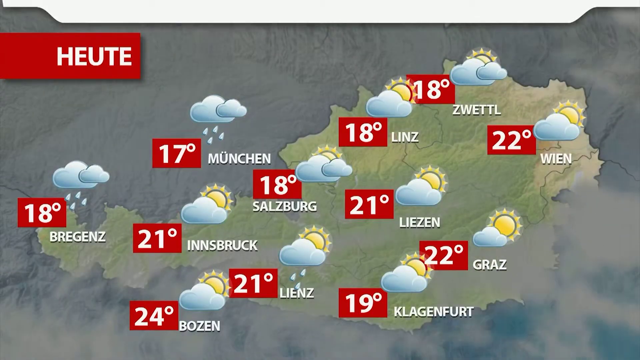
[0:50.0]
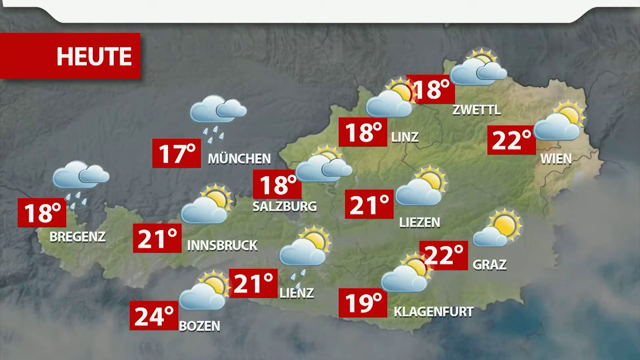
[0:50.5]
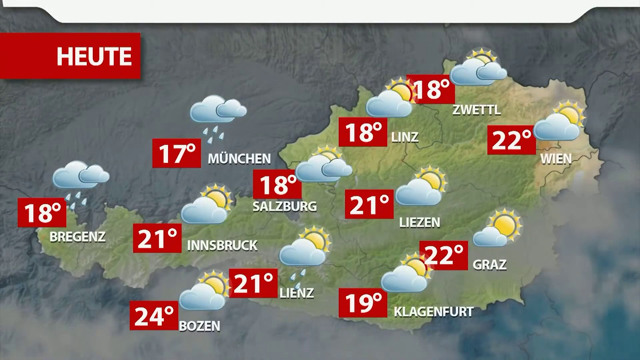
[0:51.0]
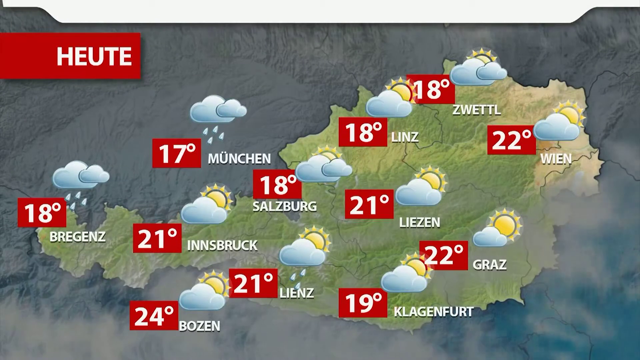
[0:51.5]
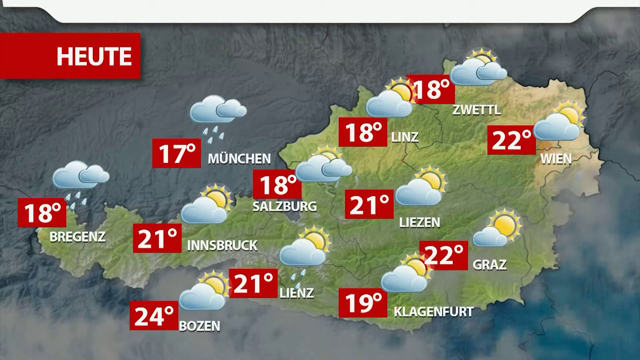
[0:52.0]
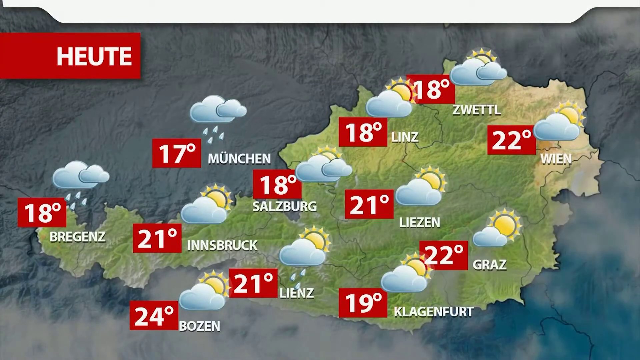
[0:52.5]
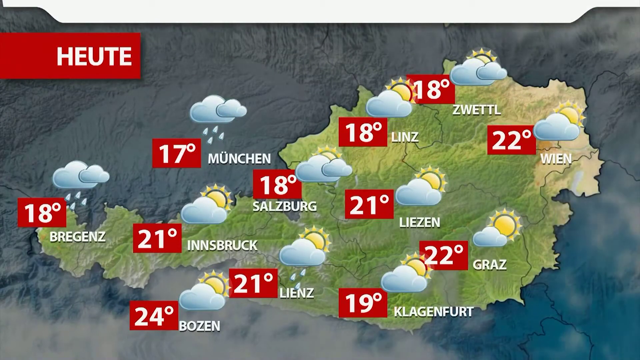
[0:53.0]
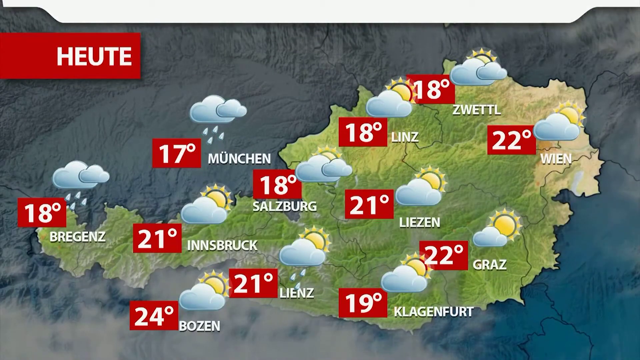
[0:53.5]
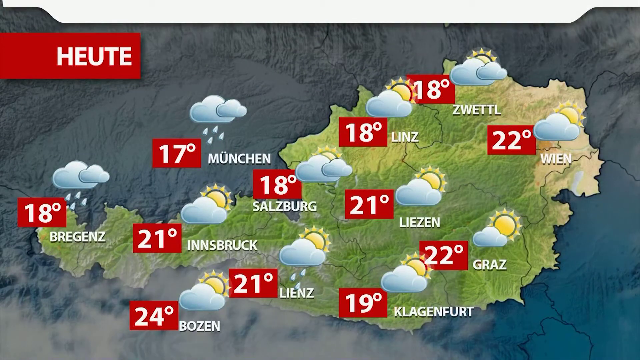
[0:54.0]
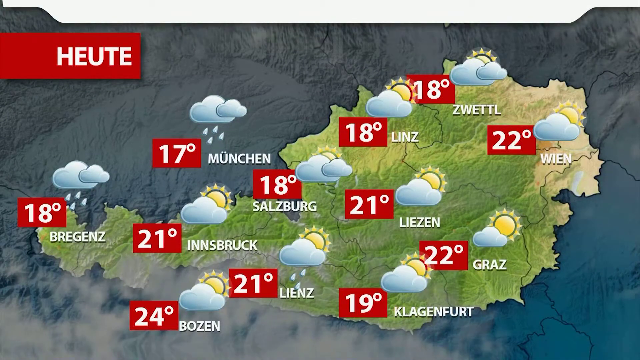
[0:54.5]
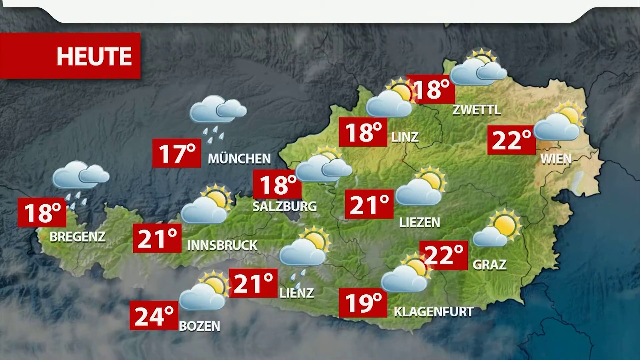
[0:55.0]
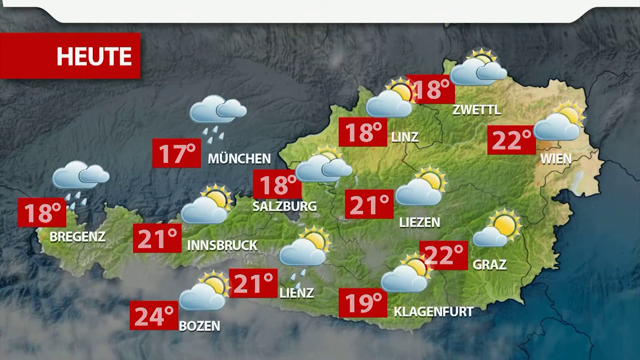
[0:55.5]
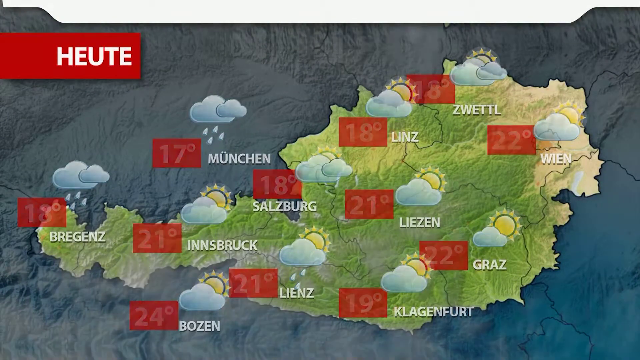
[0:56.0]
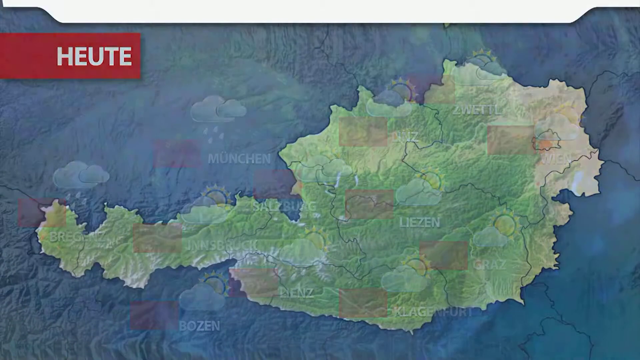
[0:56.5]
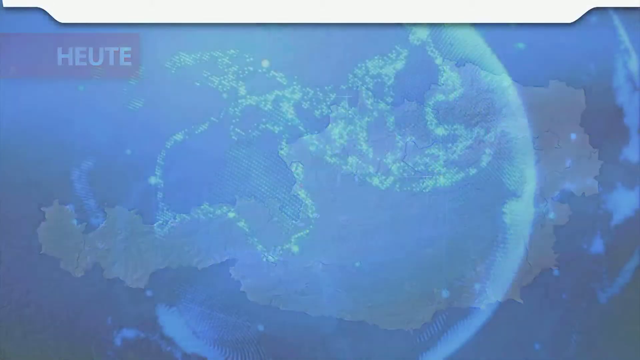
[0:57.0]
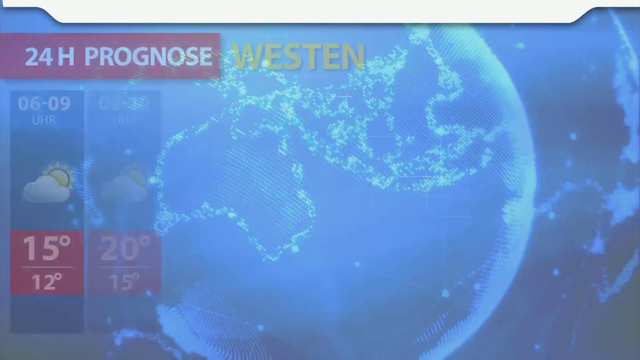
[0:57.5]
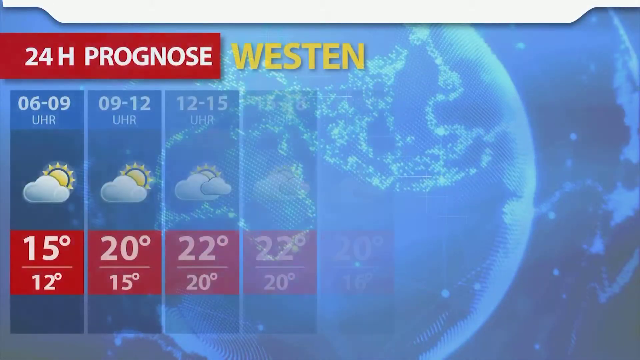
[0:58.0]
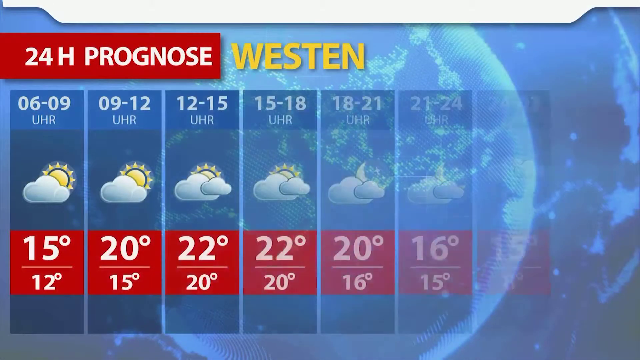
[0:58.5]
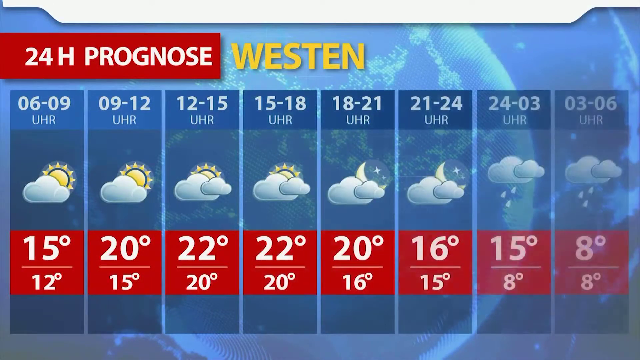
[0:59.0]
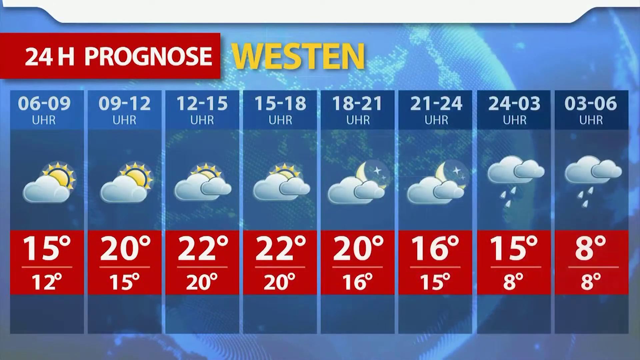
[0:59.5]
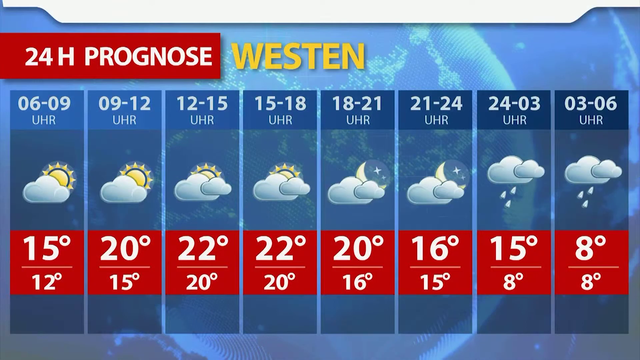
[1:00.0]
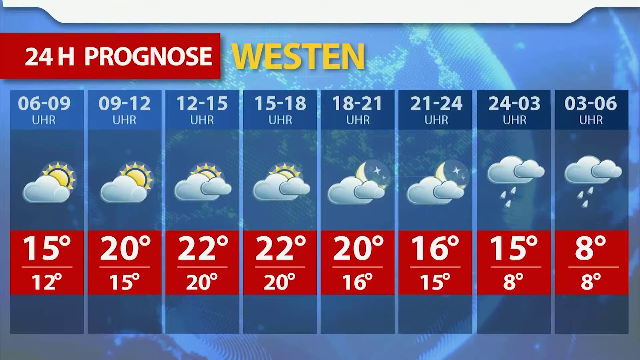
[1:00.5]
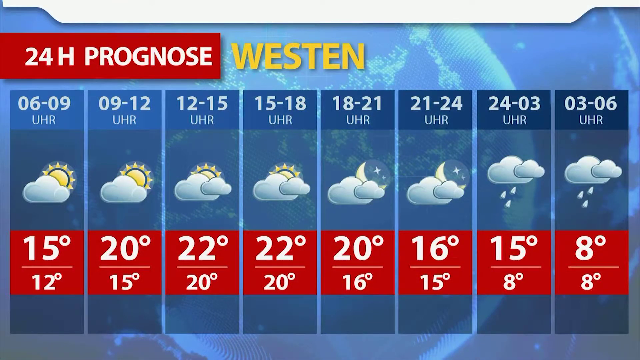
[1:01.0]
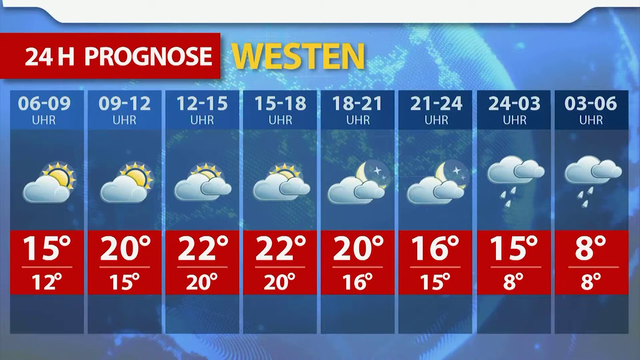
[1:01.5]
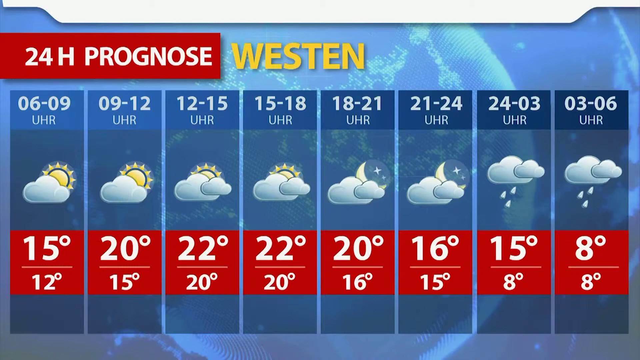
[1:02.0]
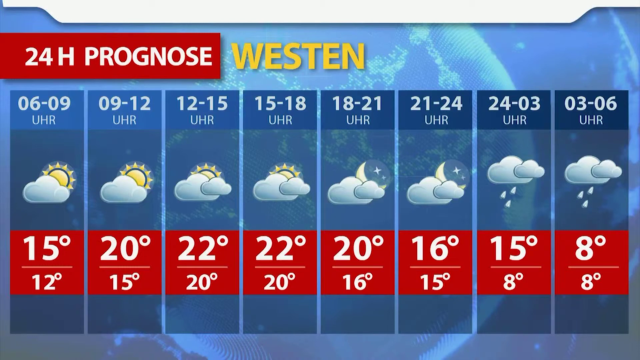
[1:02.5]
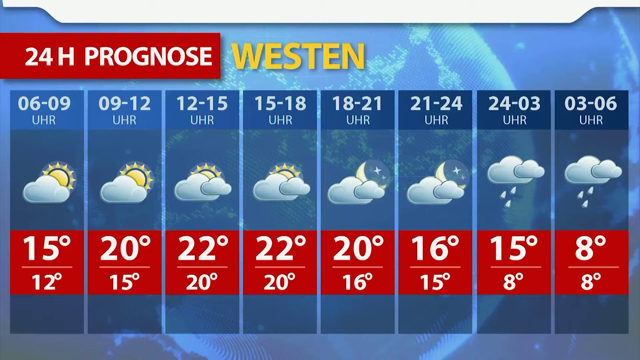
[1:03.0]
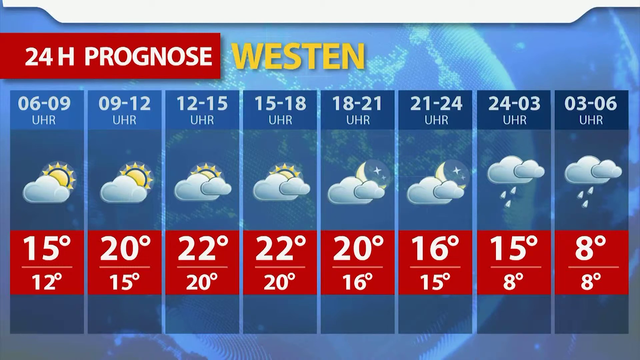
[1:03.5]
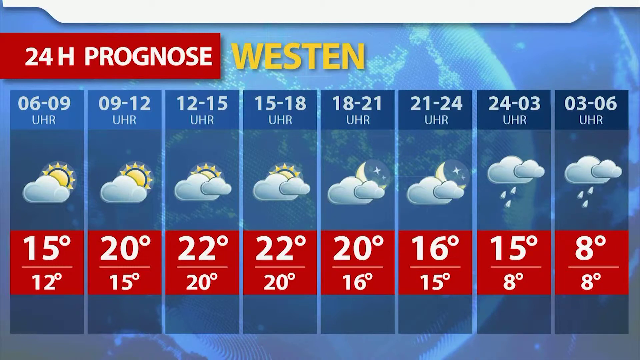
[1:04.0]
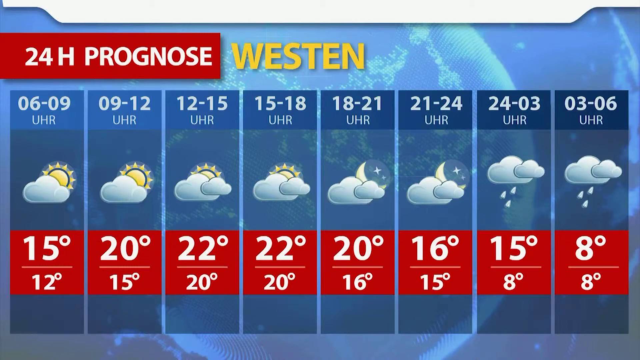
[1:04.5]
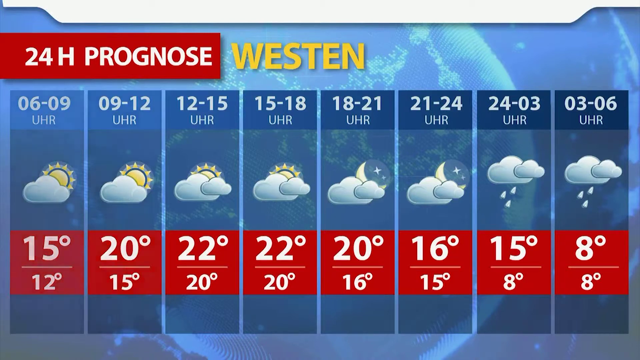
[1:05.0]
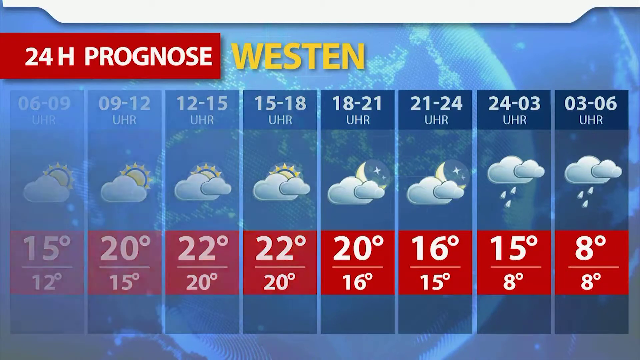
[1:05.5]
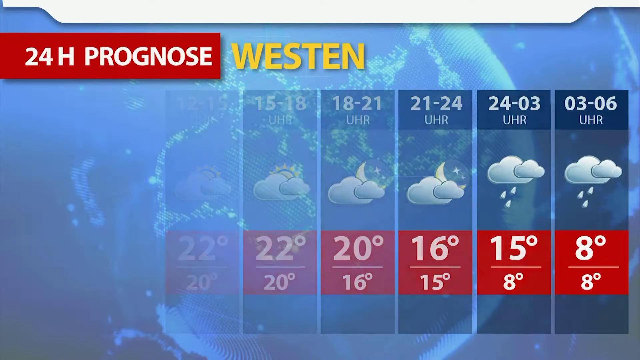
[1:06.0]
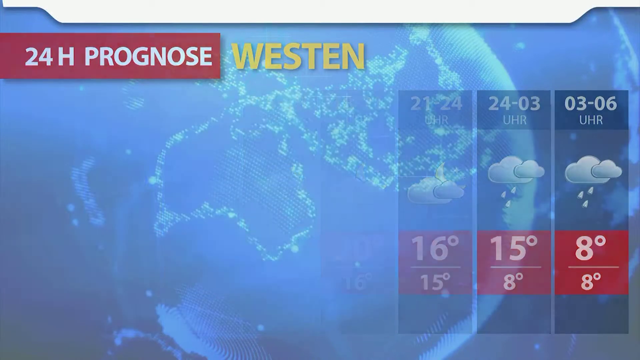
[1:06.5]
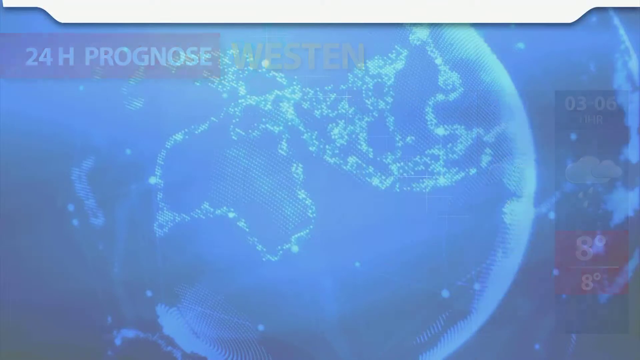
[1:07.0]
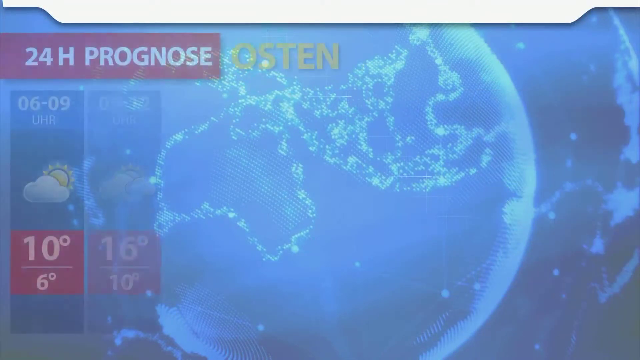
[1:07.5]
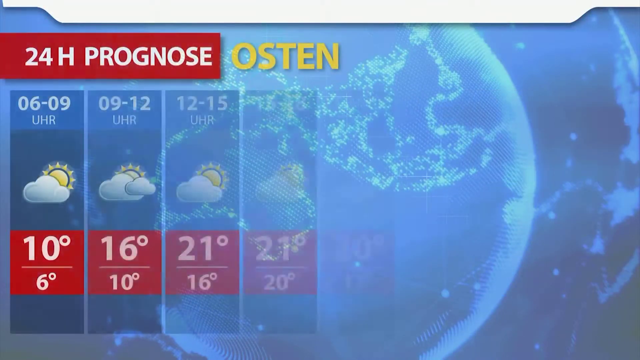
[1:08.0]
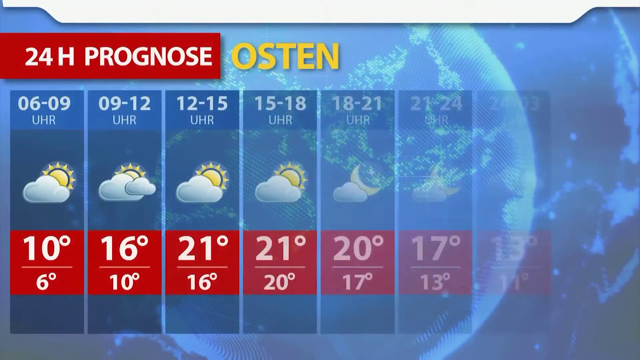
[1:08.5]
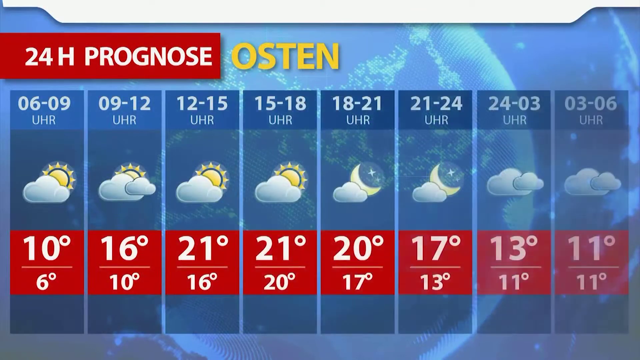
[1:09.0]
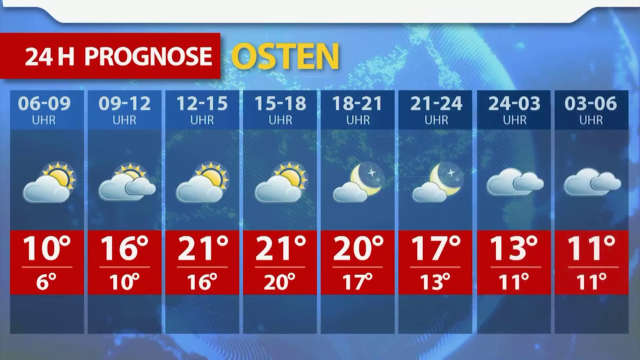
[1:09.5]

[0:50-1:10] The text "24H Prognos West End" appears, with West End written in yellow. The weather icons differ: some show a cloud with rain falling down, others a cloud with the moon, and others a cloud with the sun. Temperatures of 15, 20, 22, 20, 16, 15 and 8 degrees Celsius are shown. The background looks like a green world.